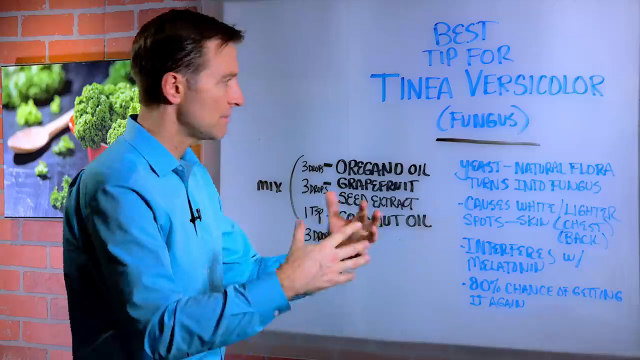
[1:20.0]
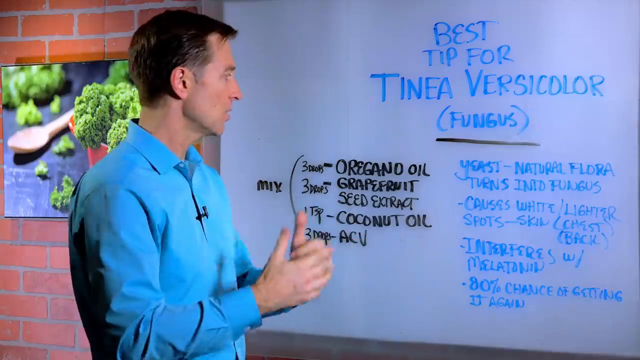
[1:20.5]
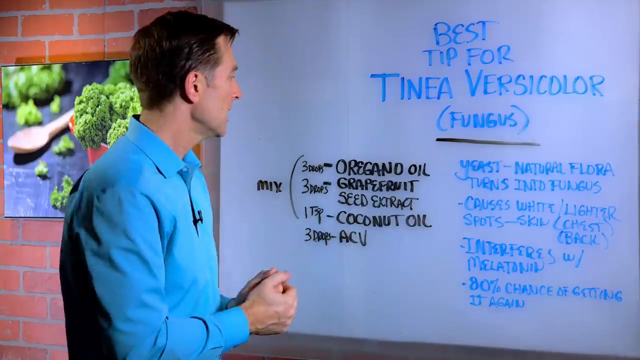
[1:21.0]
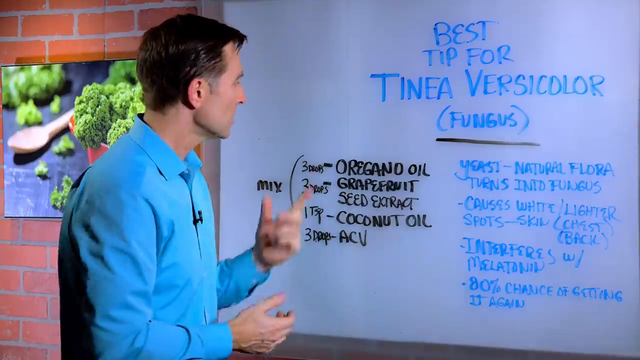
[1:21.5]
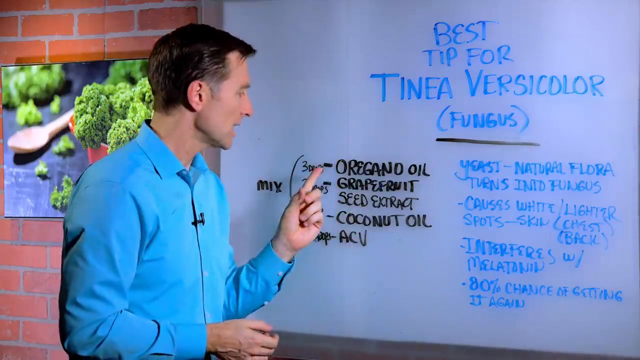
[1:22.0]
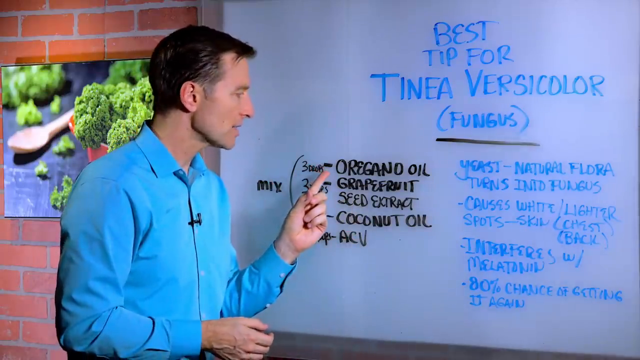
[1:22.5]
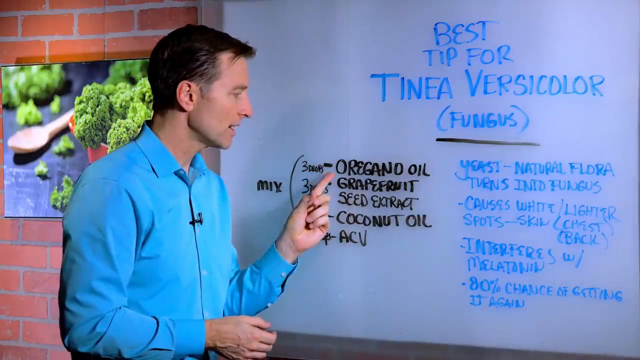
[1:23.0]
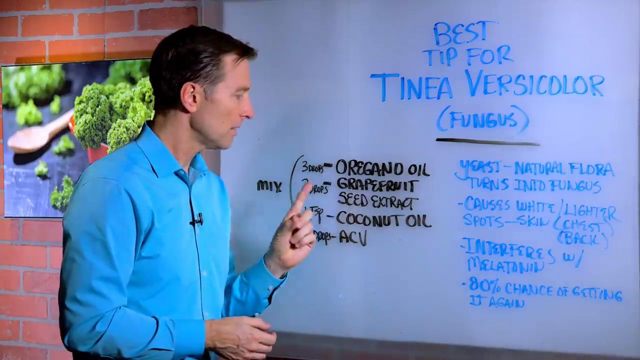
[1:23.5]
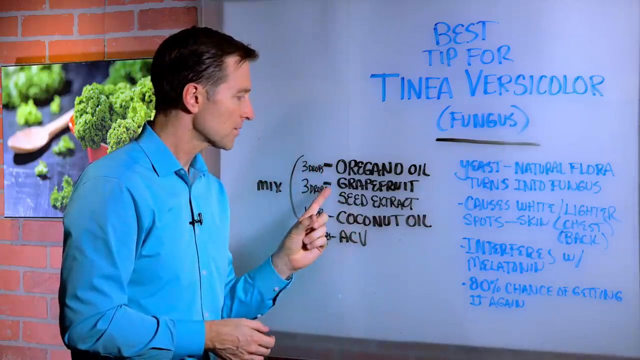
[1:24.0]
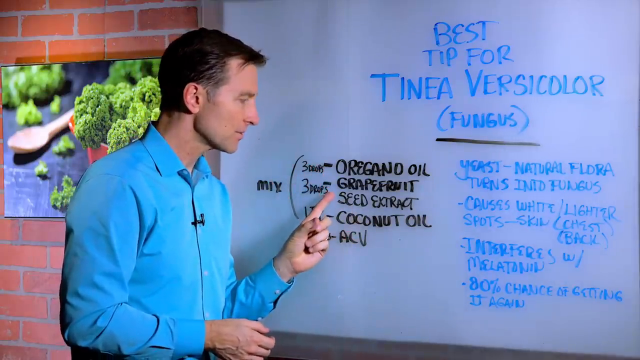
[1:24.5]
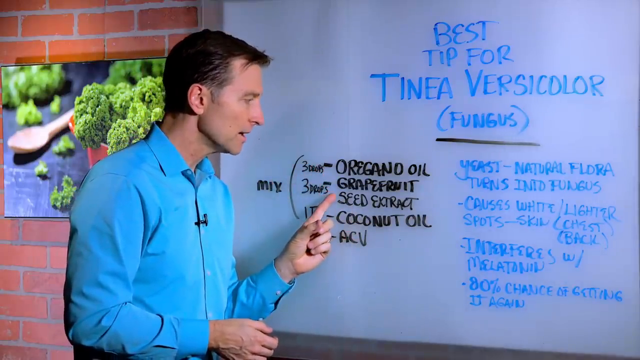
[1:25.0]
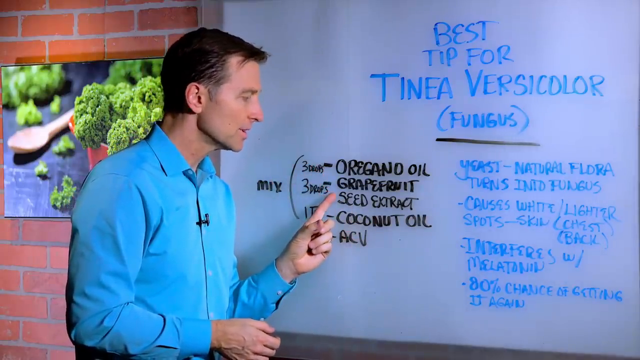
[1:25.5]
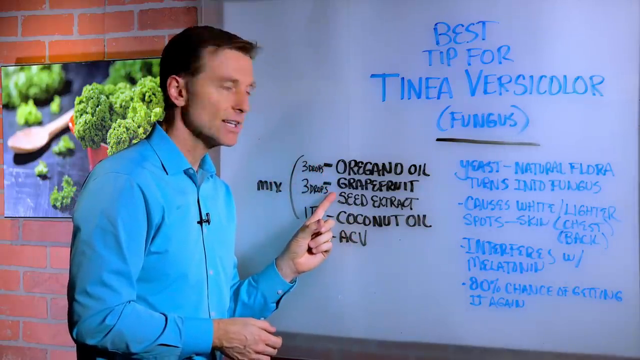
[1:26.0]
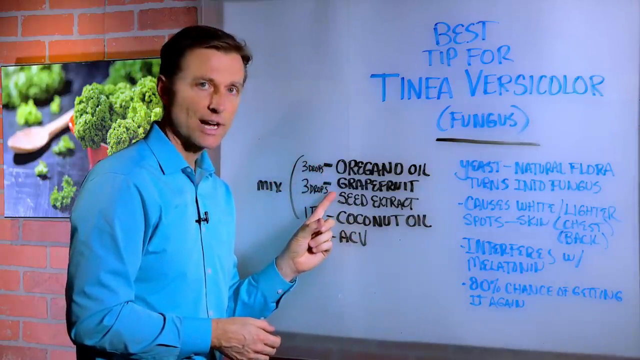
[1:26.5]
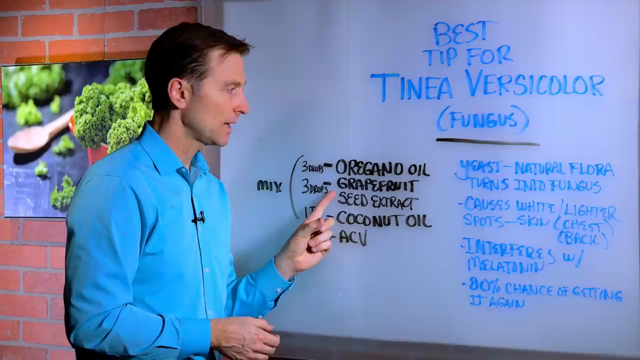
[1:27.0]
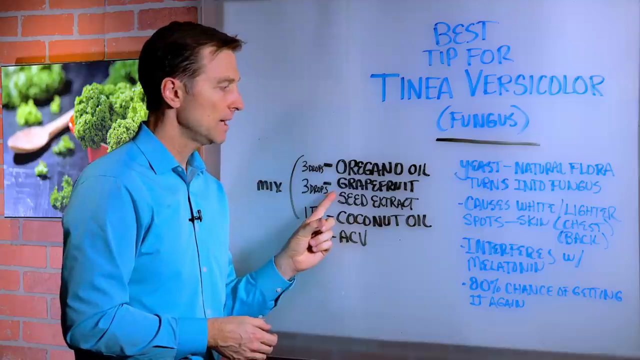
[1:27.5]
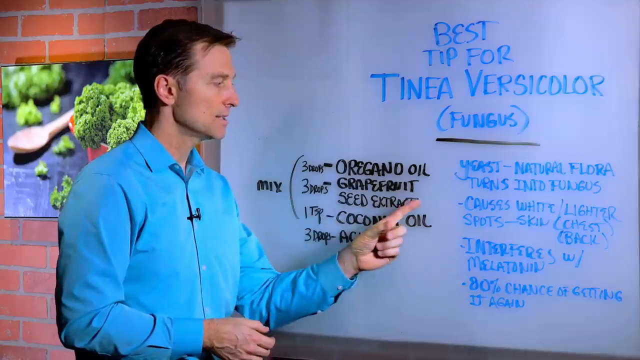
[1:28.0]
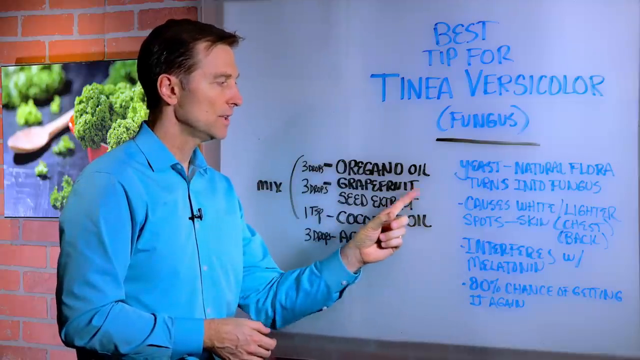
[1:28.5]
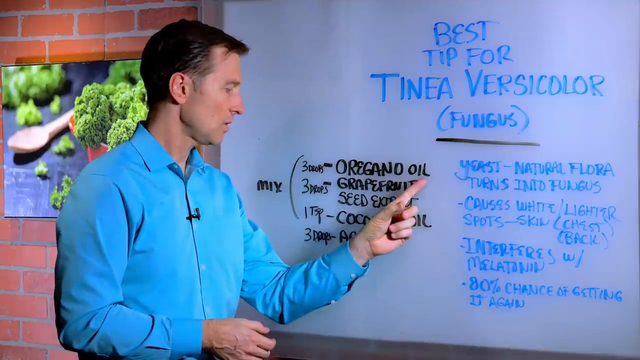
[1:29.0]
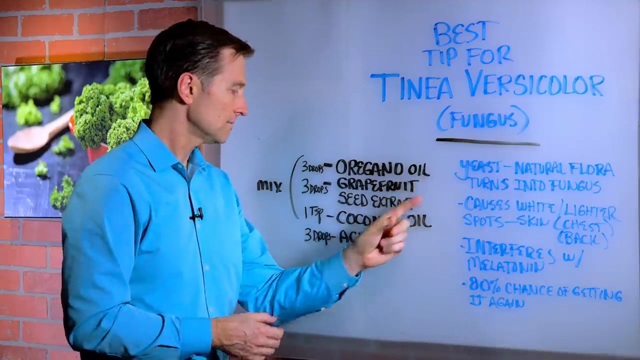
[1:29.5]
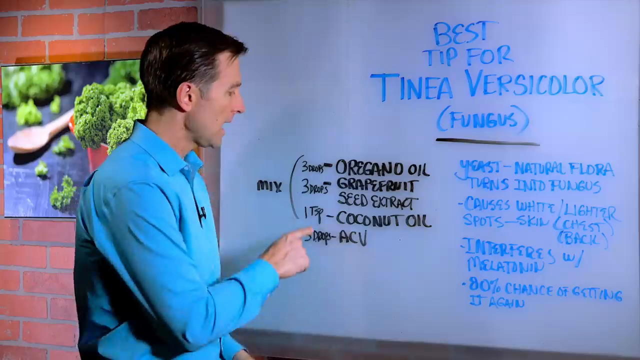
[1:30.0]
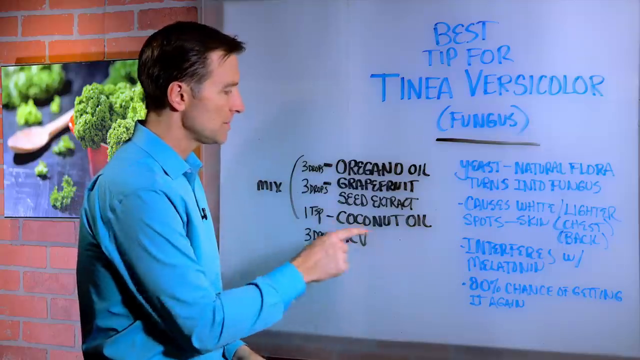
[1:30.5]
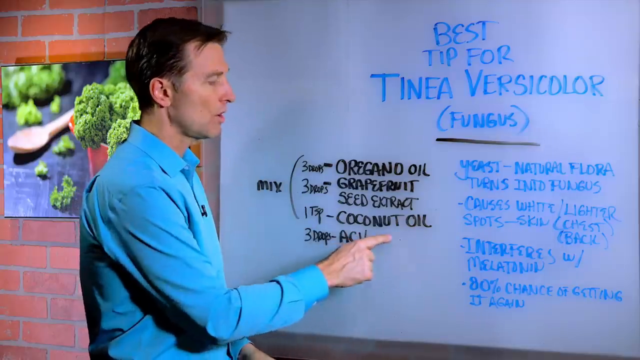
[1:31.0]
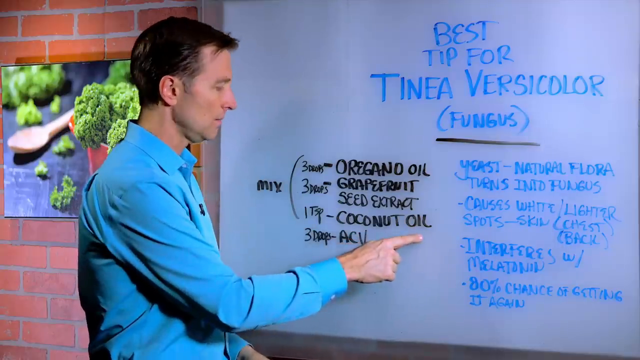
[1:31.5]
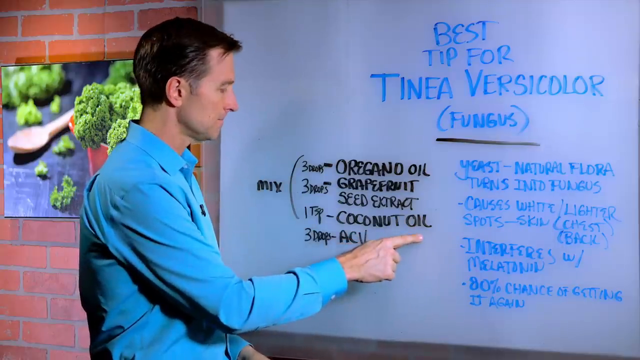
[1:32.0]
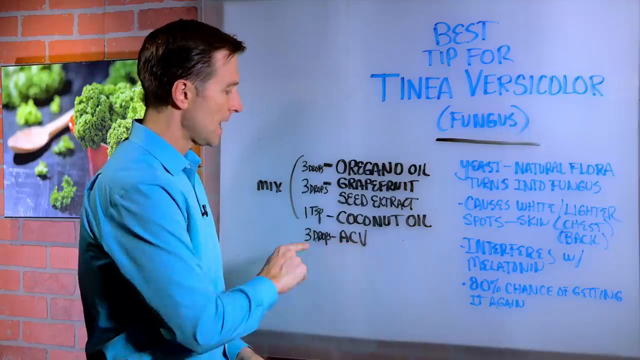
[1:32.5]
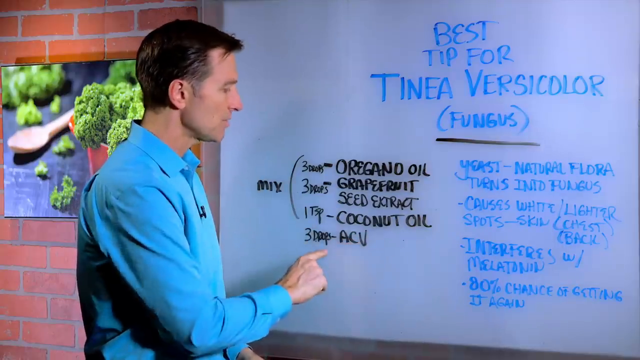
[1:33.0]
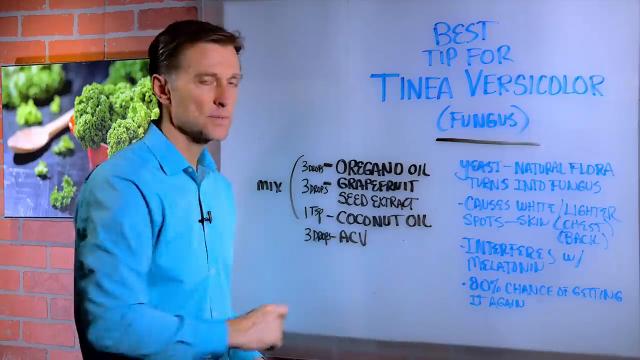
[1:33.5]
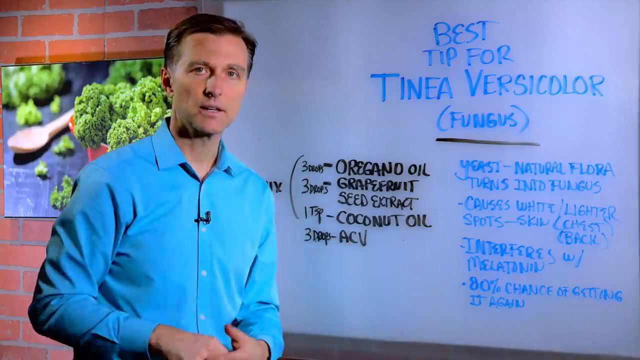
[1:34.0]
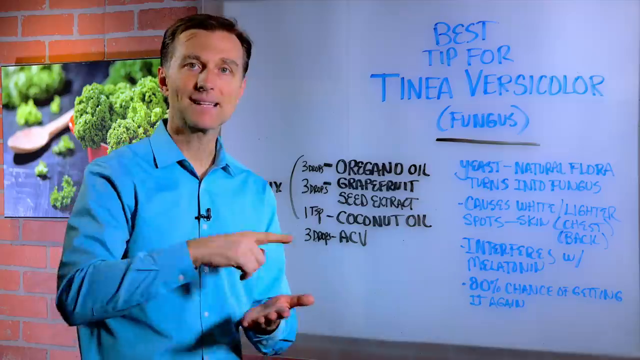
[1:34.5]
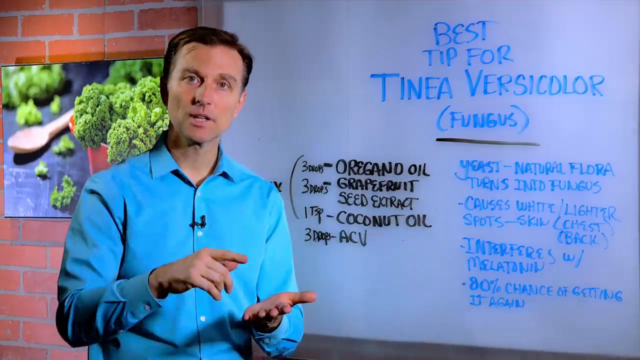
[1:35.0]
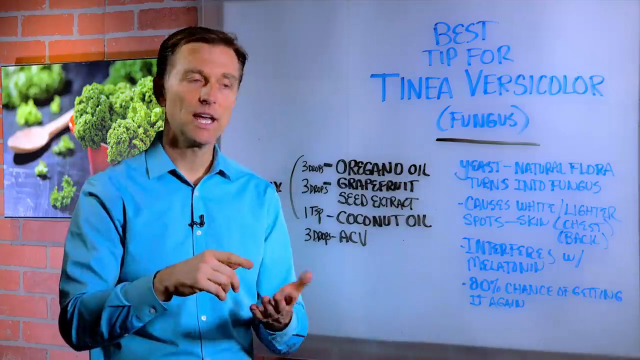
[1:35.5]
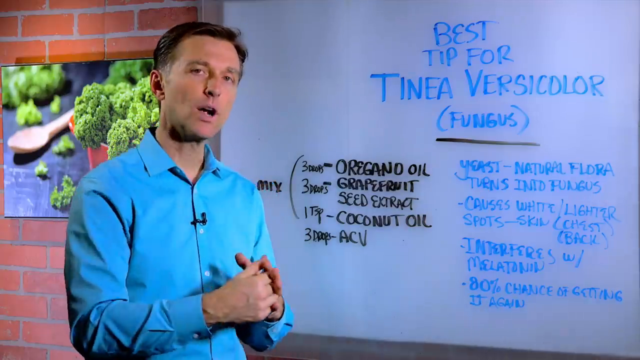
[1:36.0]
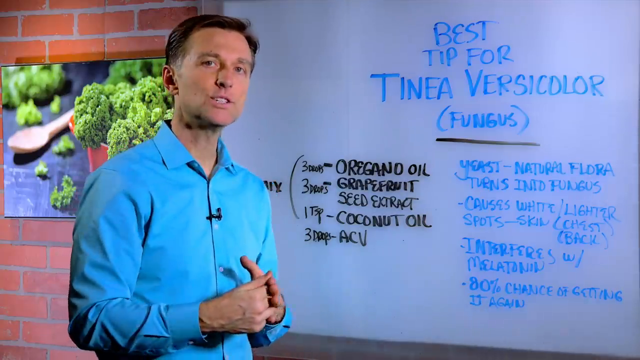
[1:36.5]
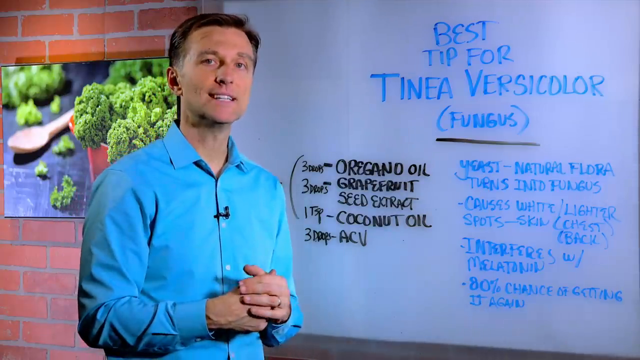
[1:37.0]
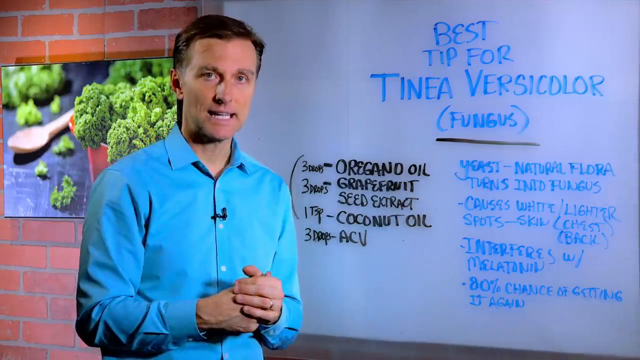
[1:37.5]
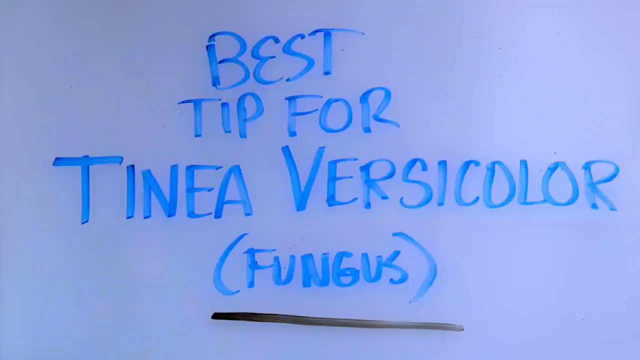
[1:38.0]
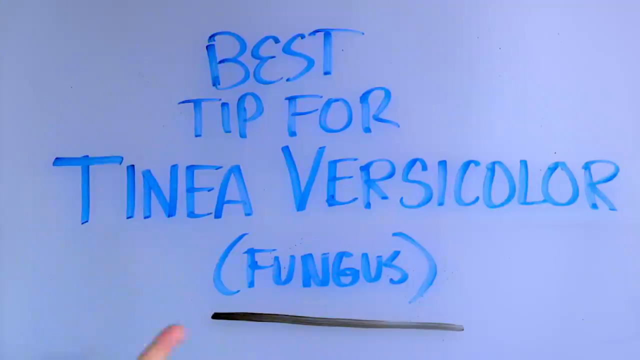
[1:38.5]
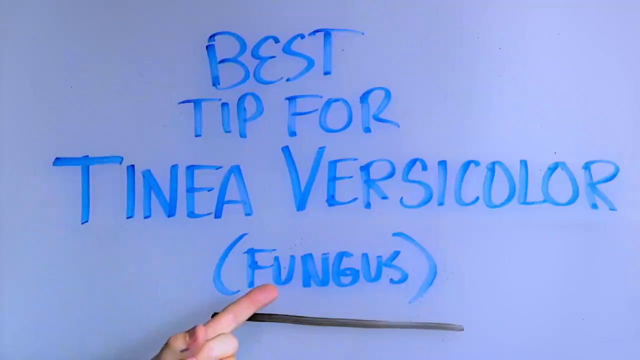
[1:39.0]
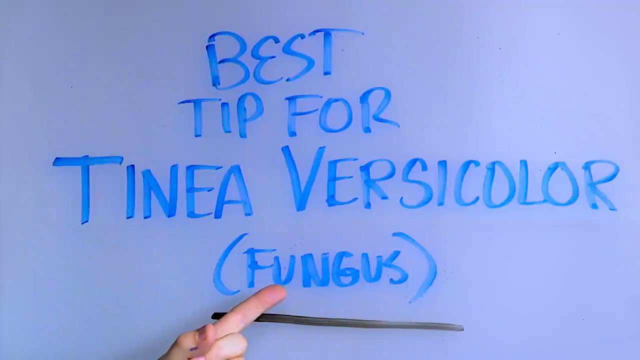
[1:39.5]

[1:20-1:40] The man points to the dot points on the left, the ones in black, which he had not addressed before. They list 3 drops of oregano oil, 3 drops of grapefruit seed extract, 1 teaspoon coconut oil and 3 drops of ACV, and tell the viewer to mix the first 4. He points first at oregano oil, then at grapefruit seed extract, then at oregano oil and the seed extract together, then moves down to the 1 teaspoon of coconut oil and then the 3 drops of ACV. He goes back to talking to the camera, motioning with his hands, and the camera zooms in slightly on fungus.